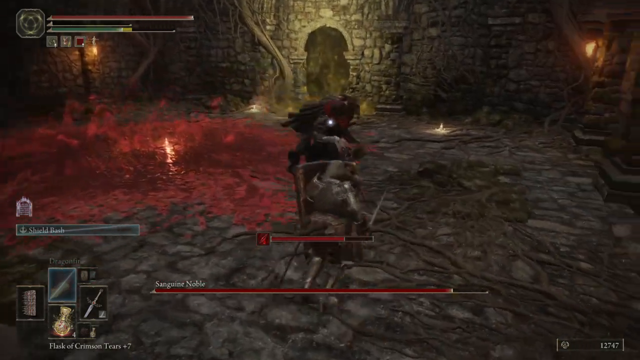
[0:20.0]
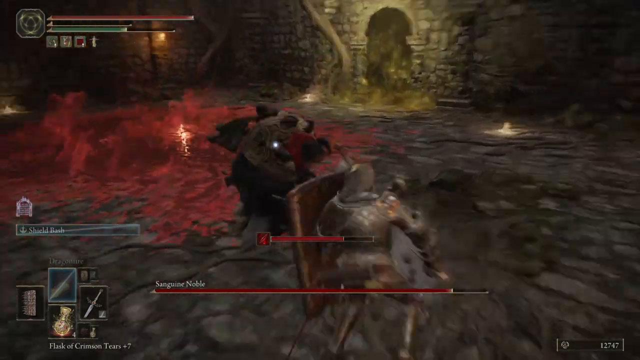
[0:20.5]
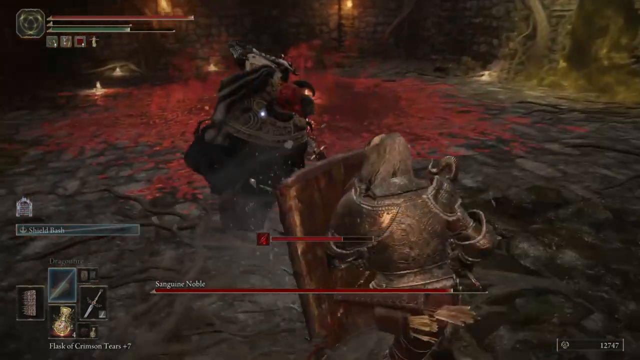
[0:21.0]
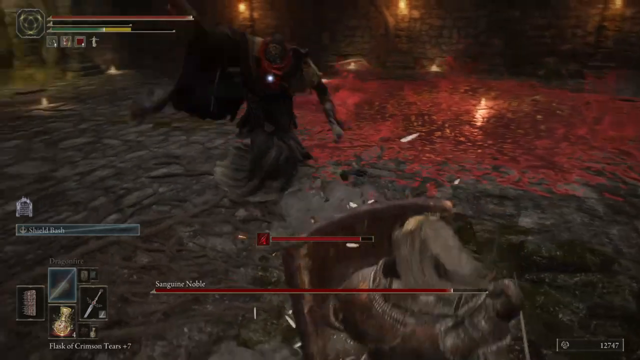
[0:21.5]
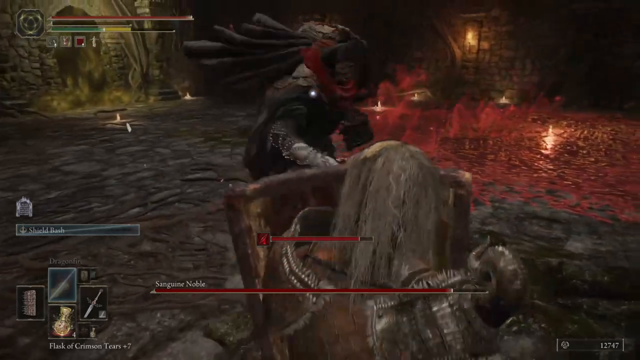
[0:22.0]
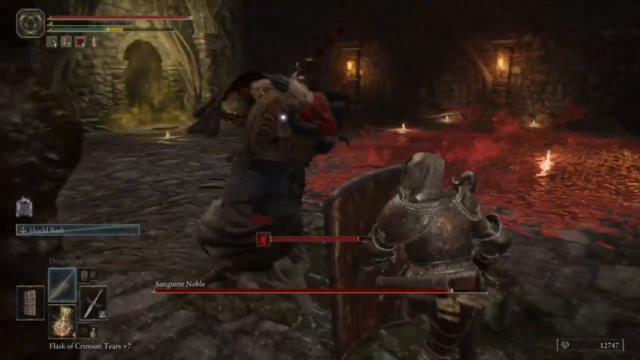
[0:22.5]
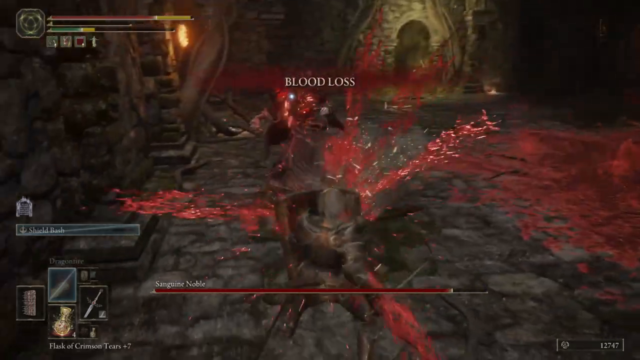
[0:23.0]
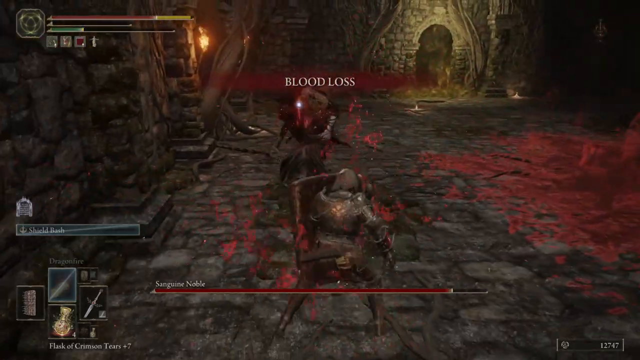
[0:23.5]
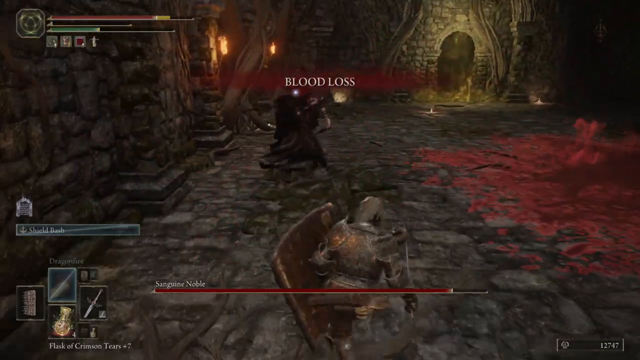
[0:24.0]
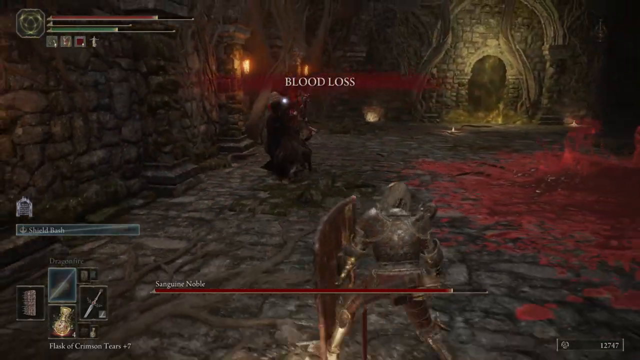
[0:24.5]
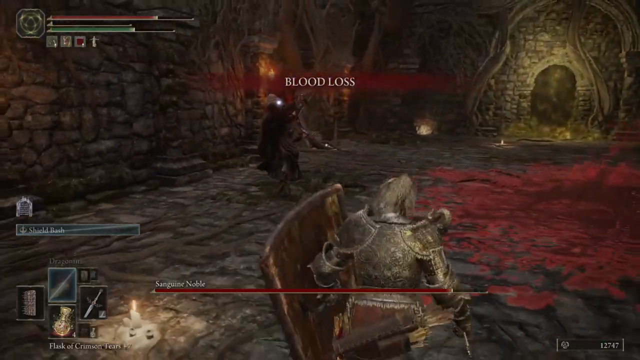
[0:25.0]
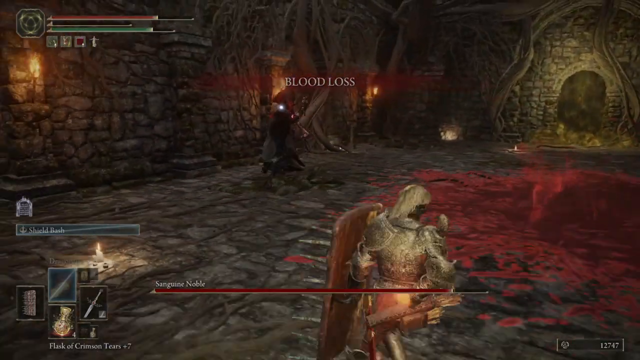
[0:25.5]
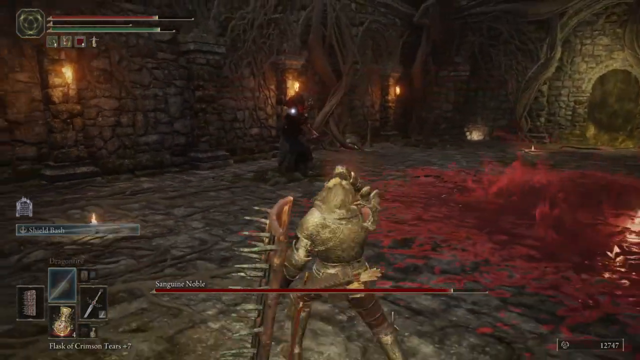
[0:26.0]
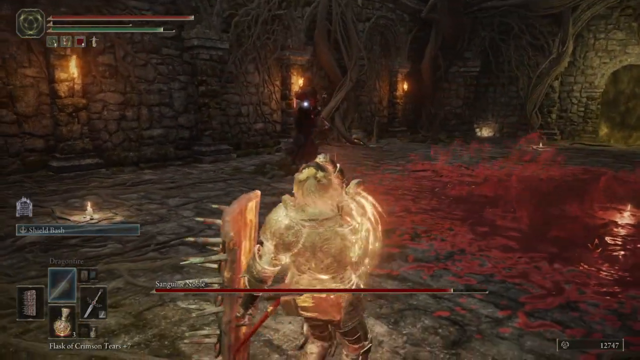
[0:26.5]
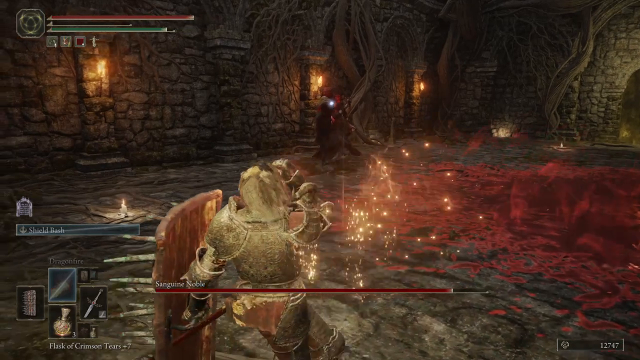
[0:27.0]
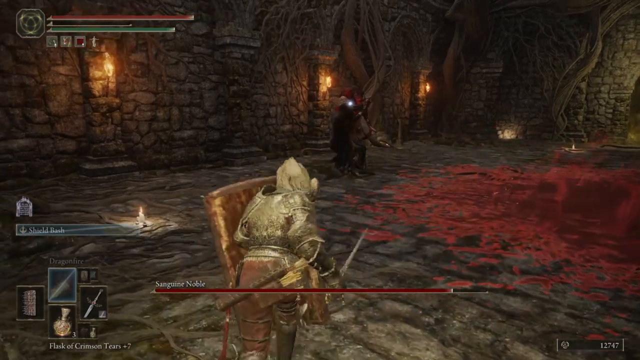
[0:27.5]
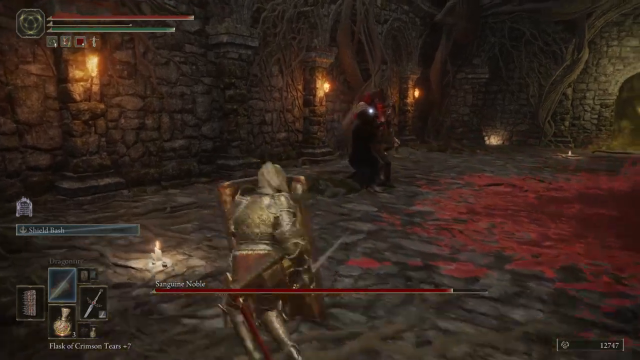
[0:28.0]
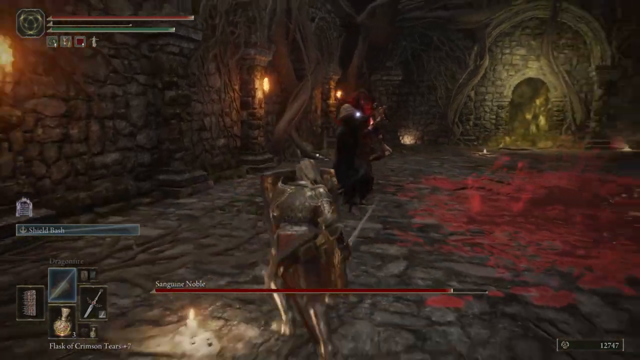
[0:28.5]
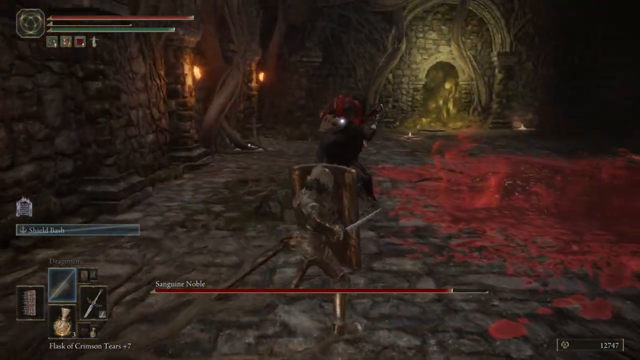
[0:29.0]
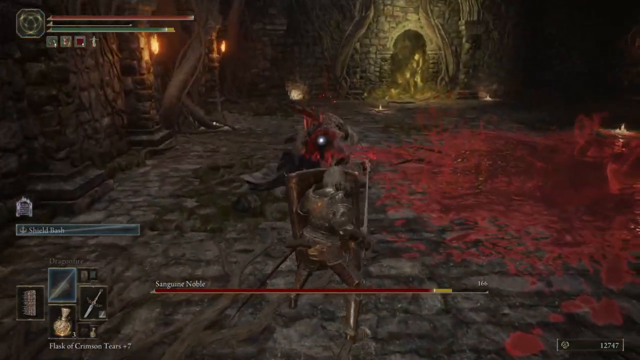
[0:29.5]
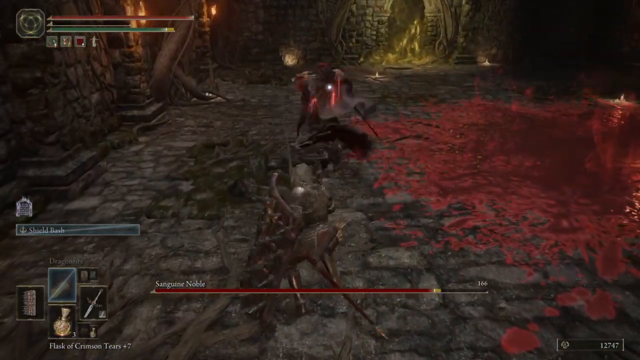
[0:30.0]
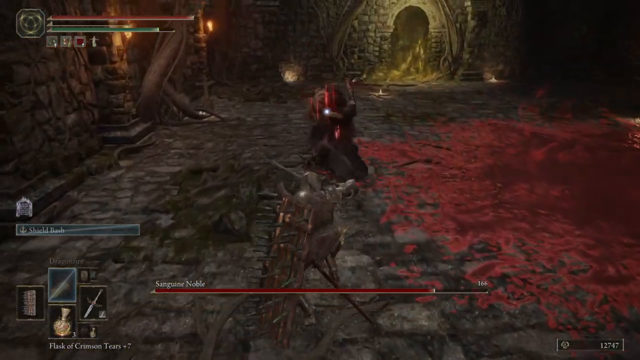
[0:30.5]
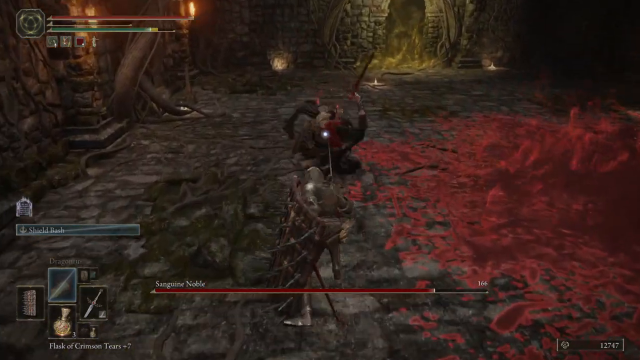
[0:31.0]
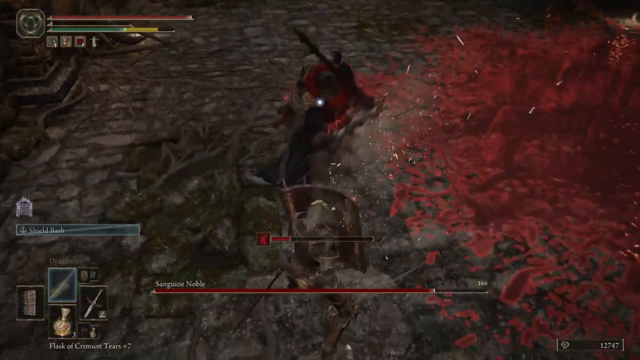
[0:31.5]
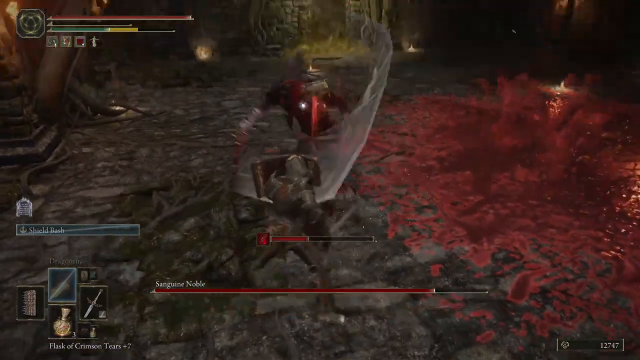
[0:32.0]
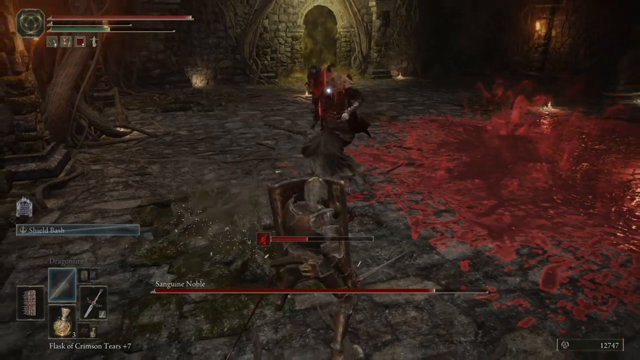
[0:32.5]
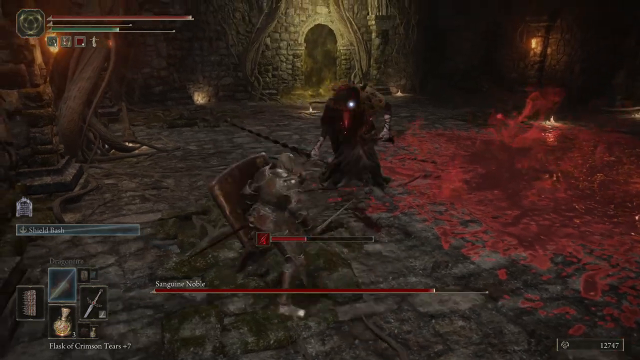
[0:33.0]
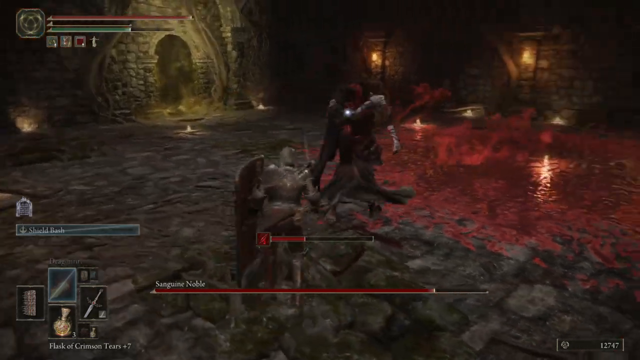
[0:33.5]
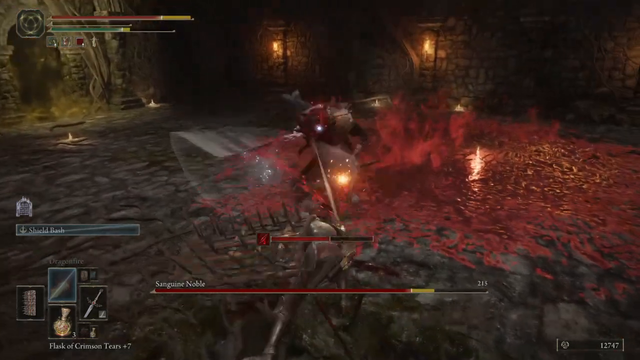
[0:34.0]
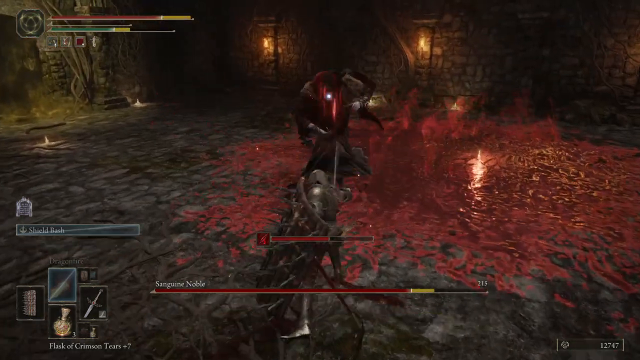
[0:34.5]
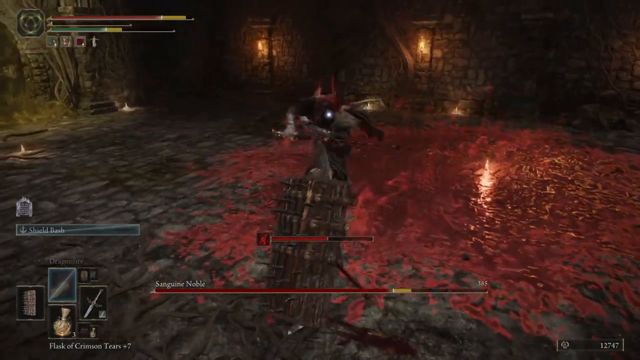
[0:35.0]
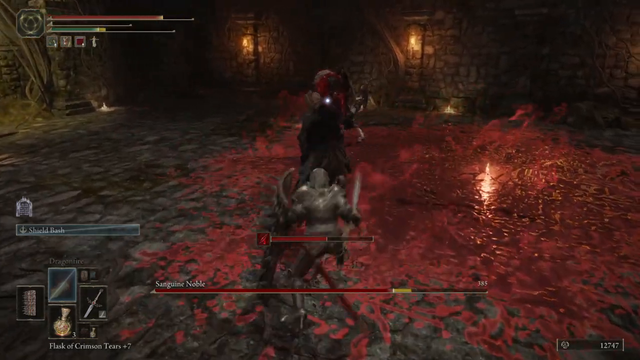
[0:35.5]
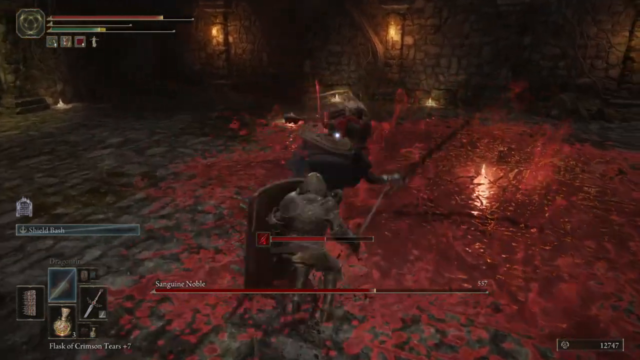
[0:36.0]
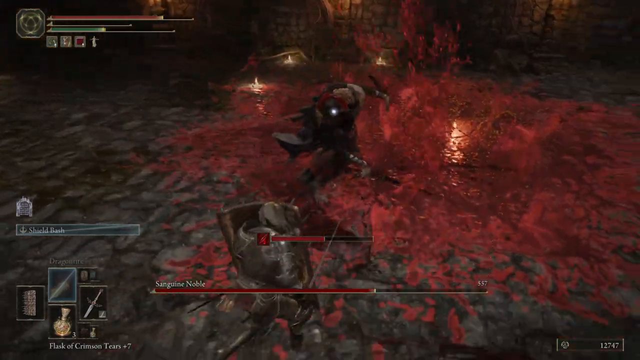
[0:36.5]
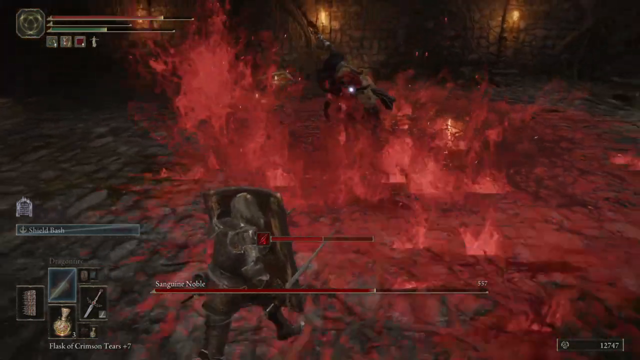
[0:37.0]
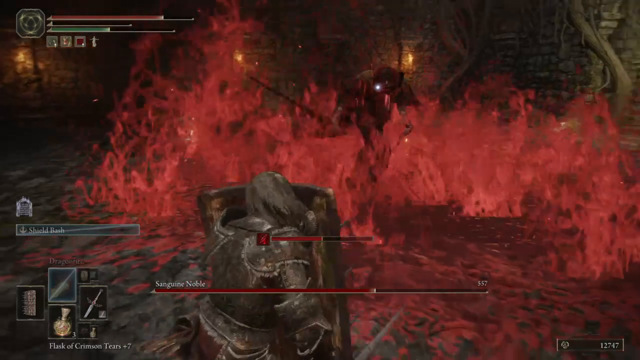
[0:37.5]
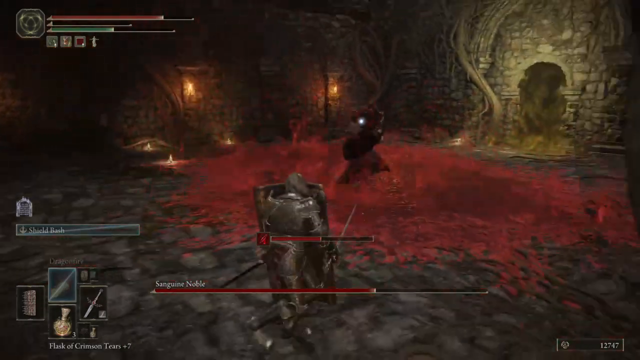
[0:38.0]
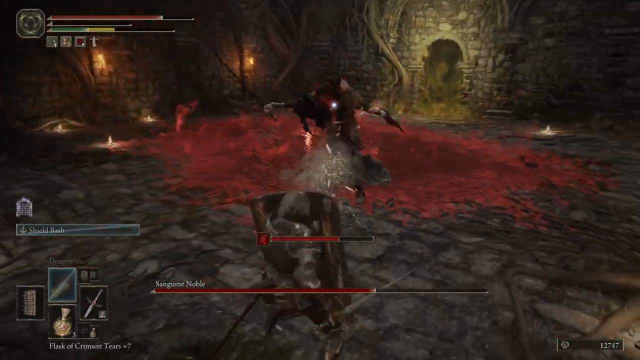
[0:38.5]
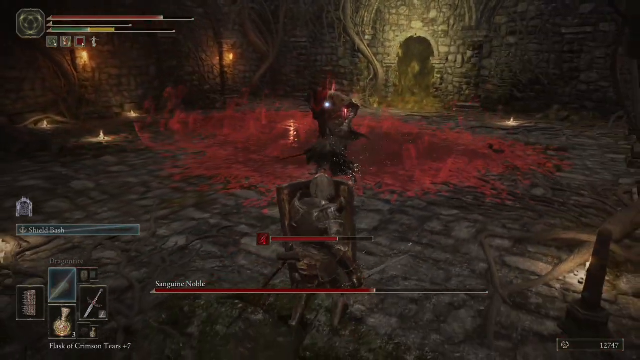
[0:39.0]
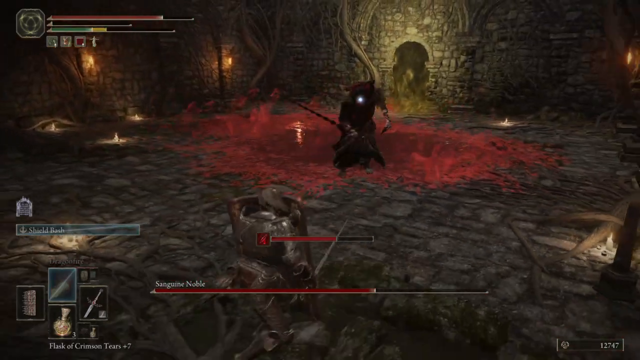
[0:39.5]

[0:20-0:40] The two subjects fight with bladed weapons in a medieval-style castle in the video game. Early on, the main character, blocking with a shield, is still hit by a heavy sword attack, and a red text box with white text appears at the top center of the screen reading "blood loss". The character then quickly sips a light-colored healing potion, after which a light aura covers almost their entire body. The antagonist has come out of a pile of blood in the middle, and the blood almost seems to be moving.